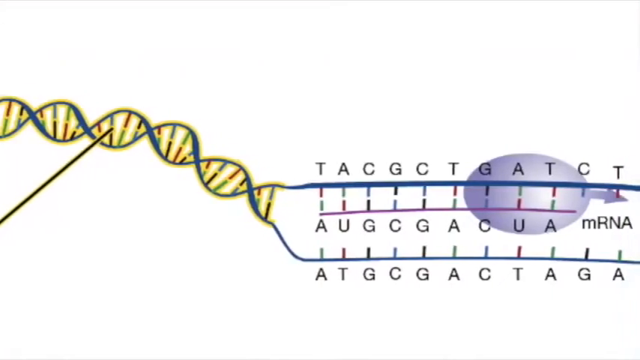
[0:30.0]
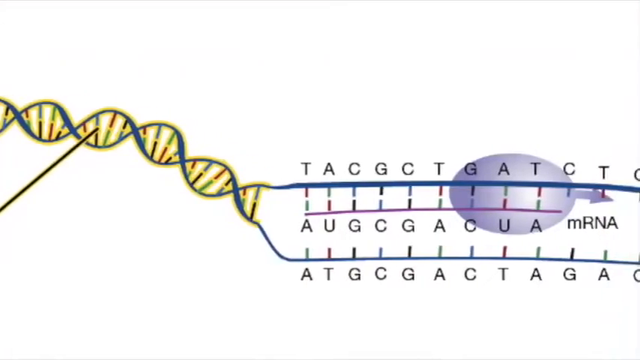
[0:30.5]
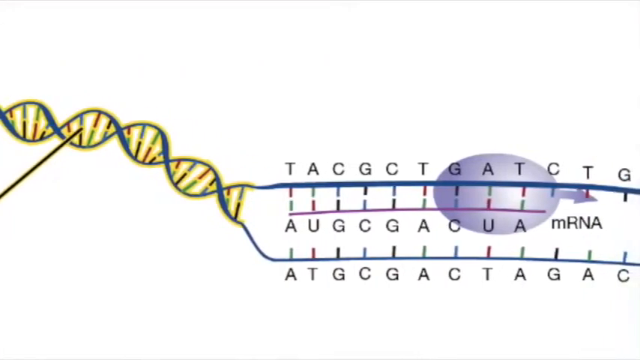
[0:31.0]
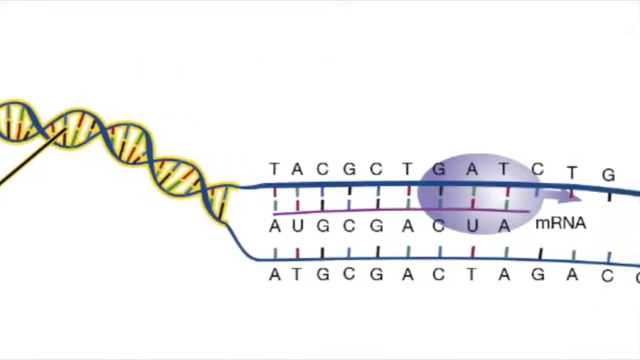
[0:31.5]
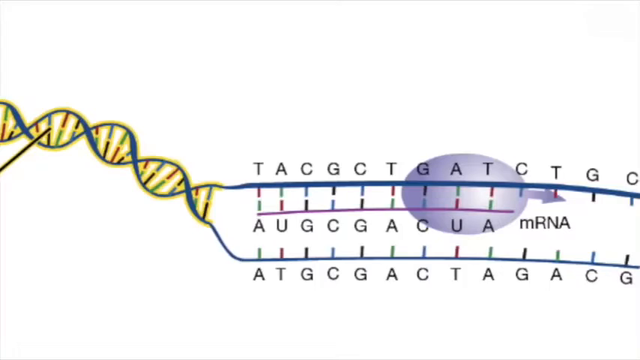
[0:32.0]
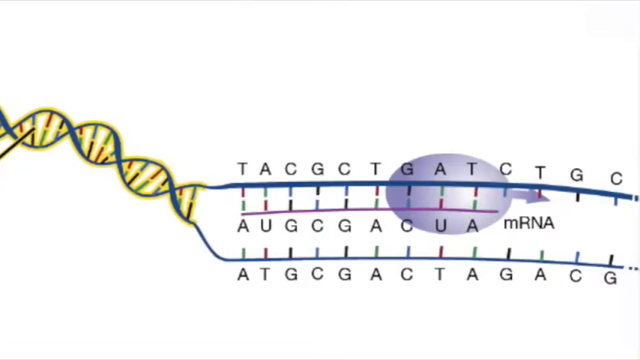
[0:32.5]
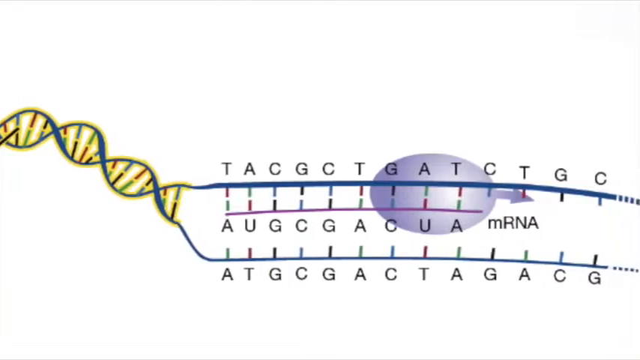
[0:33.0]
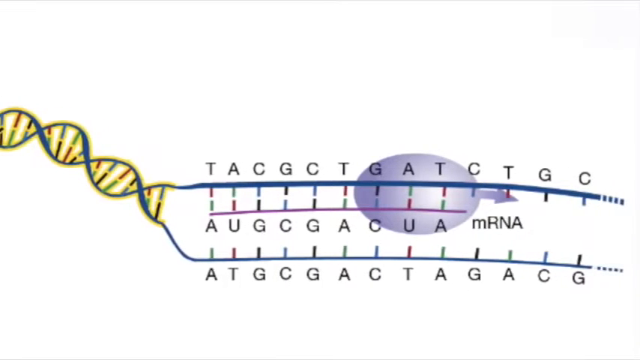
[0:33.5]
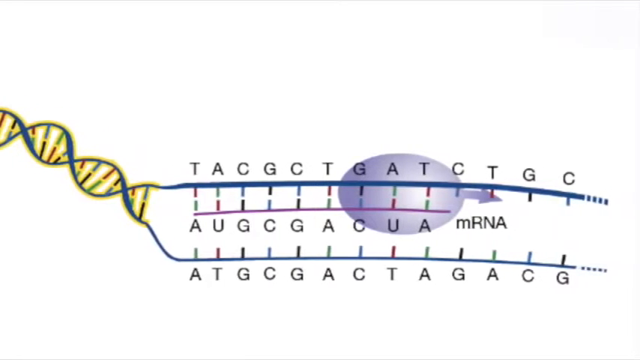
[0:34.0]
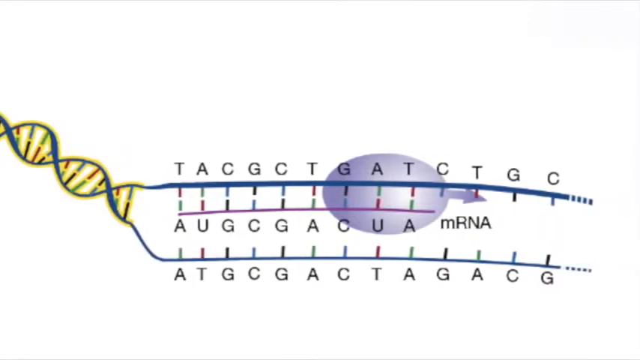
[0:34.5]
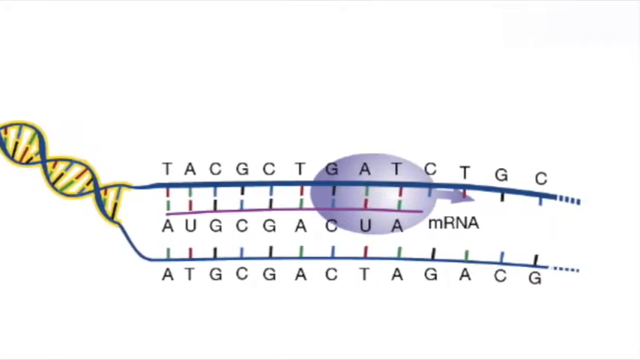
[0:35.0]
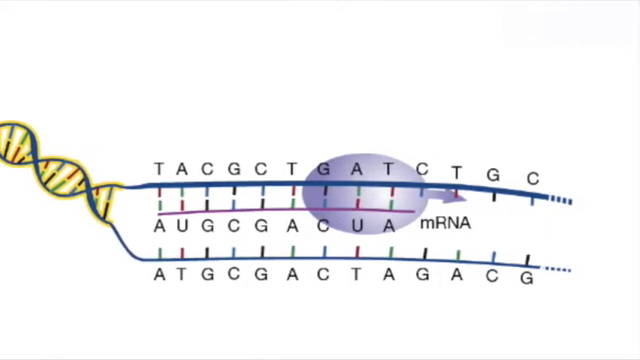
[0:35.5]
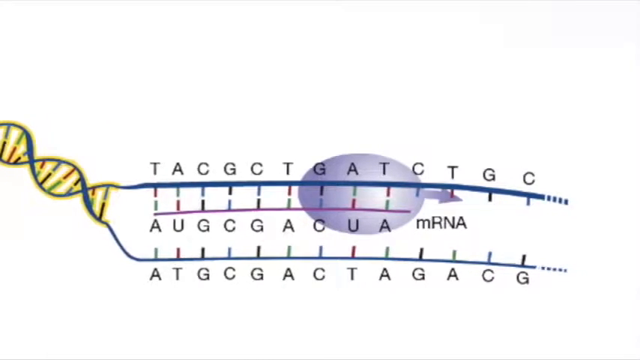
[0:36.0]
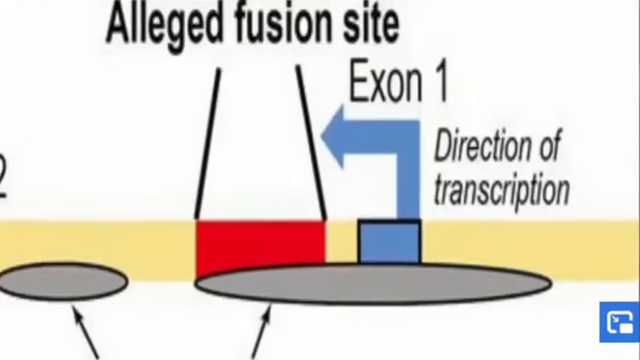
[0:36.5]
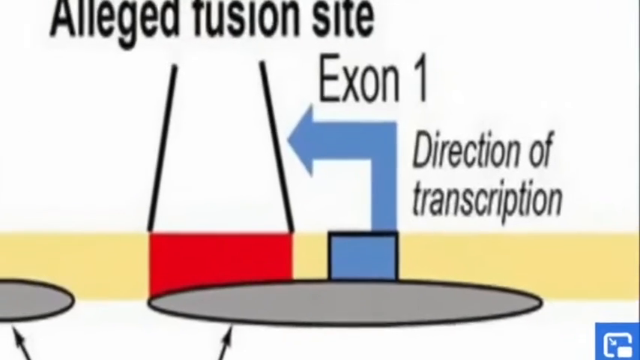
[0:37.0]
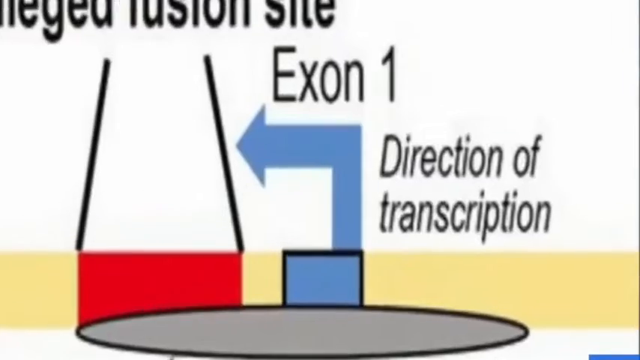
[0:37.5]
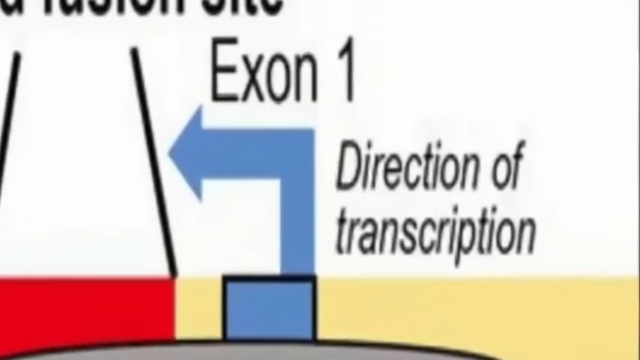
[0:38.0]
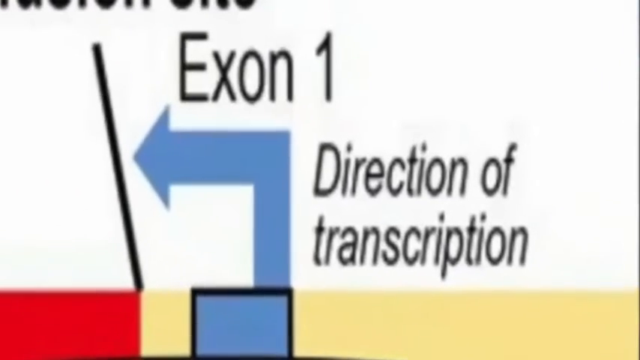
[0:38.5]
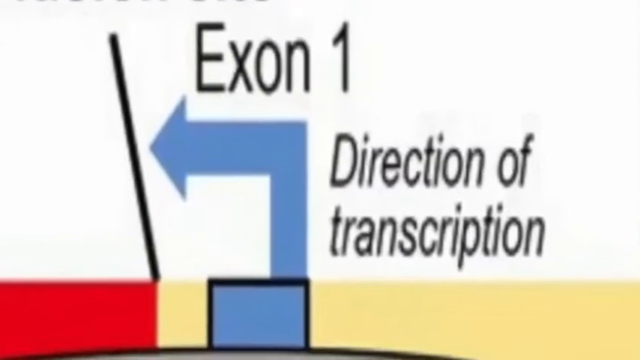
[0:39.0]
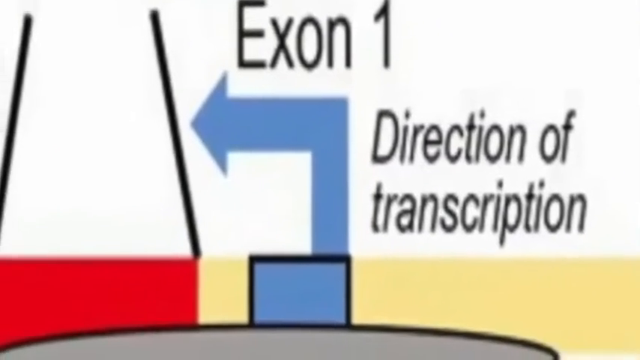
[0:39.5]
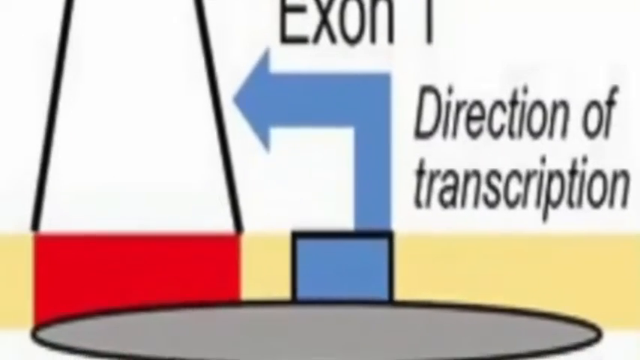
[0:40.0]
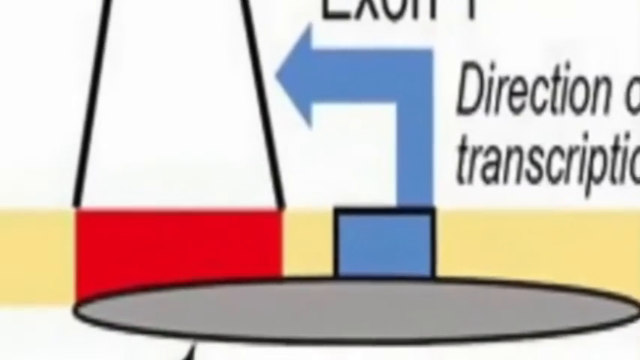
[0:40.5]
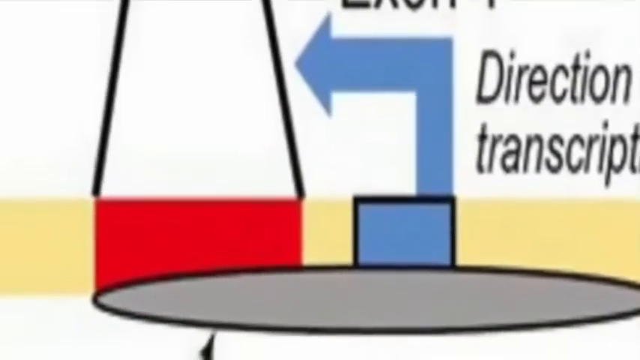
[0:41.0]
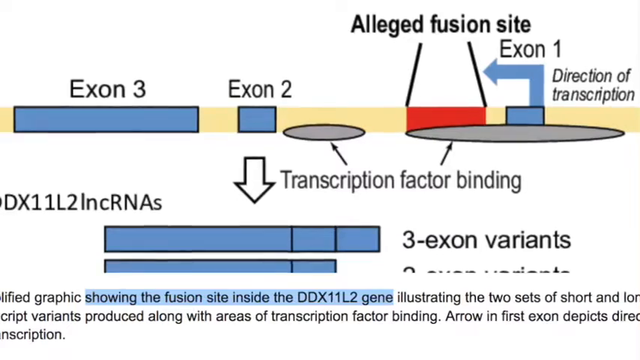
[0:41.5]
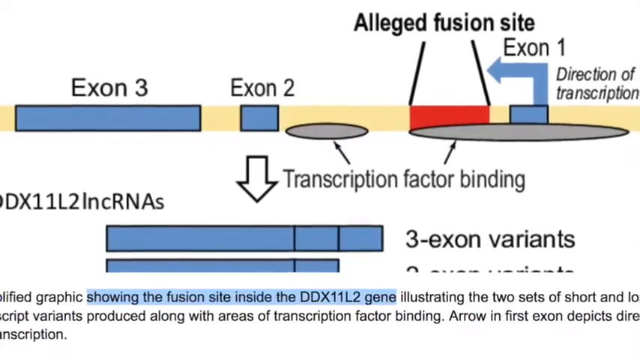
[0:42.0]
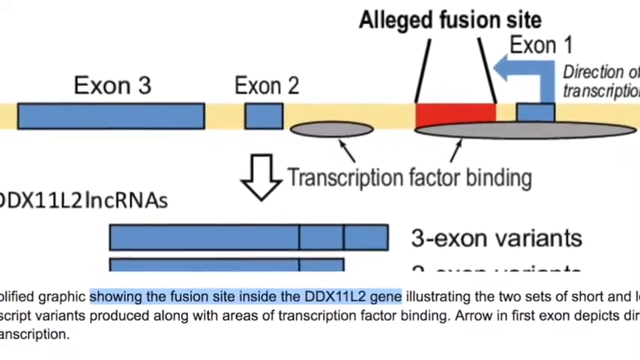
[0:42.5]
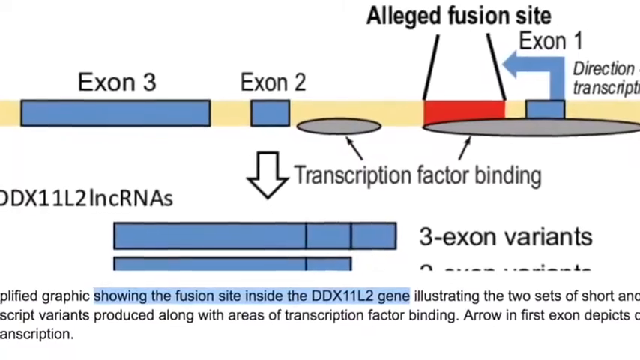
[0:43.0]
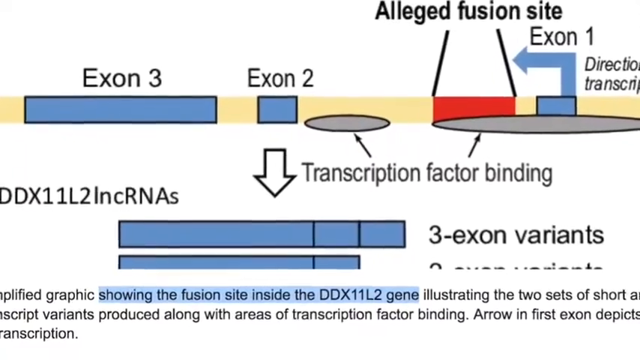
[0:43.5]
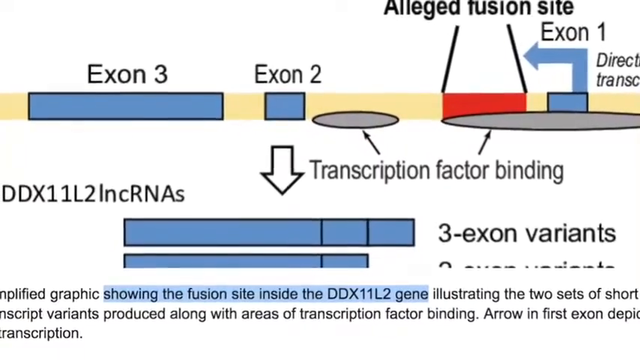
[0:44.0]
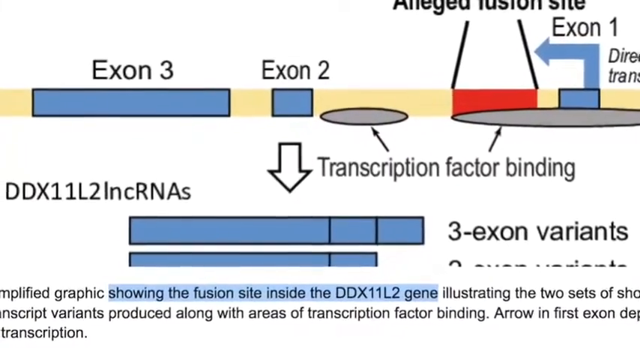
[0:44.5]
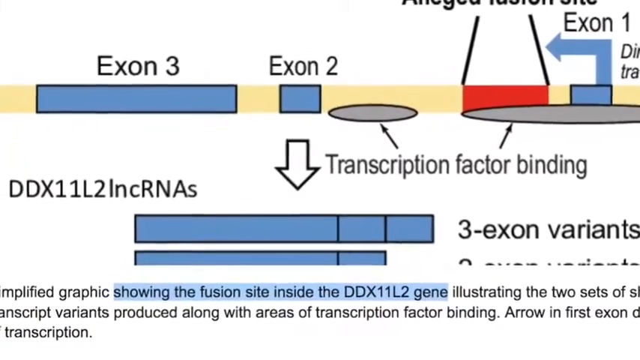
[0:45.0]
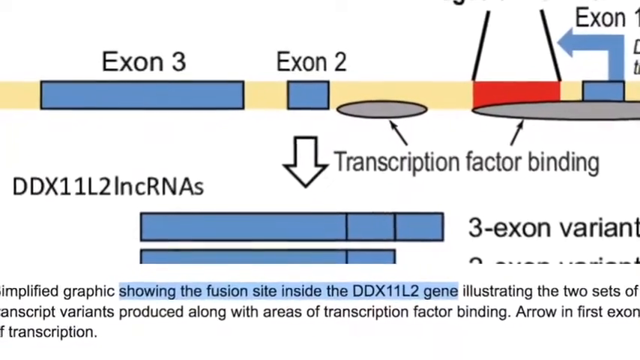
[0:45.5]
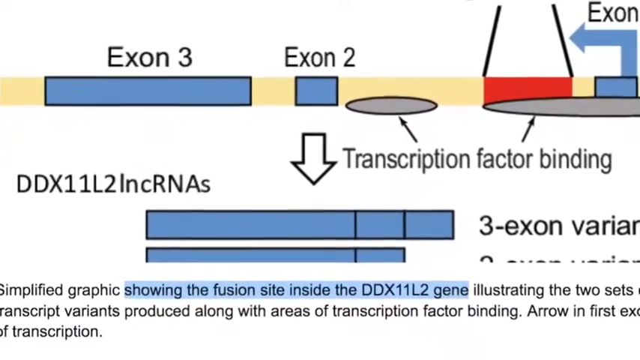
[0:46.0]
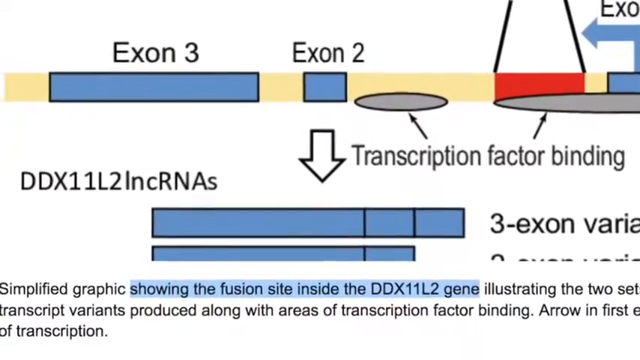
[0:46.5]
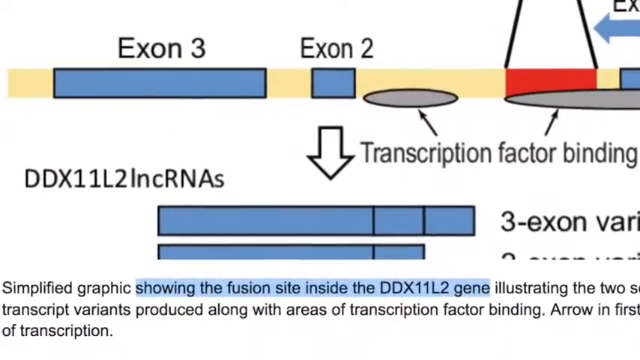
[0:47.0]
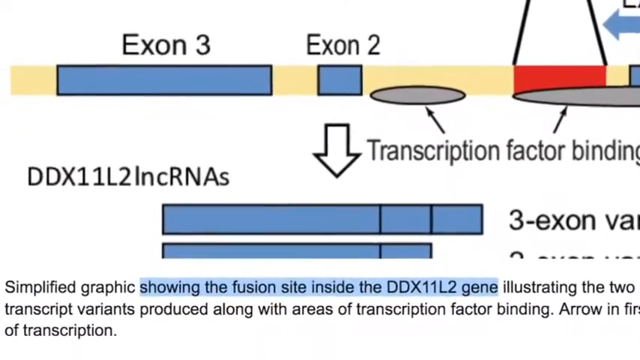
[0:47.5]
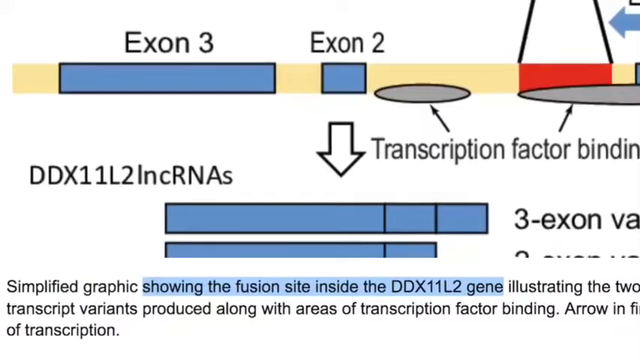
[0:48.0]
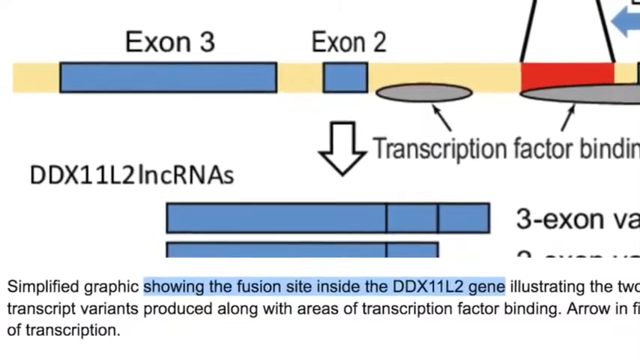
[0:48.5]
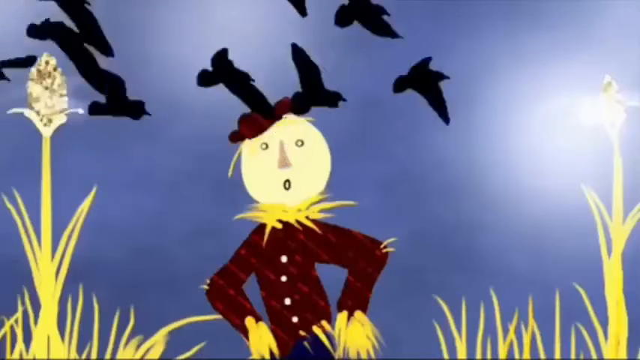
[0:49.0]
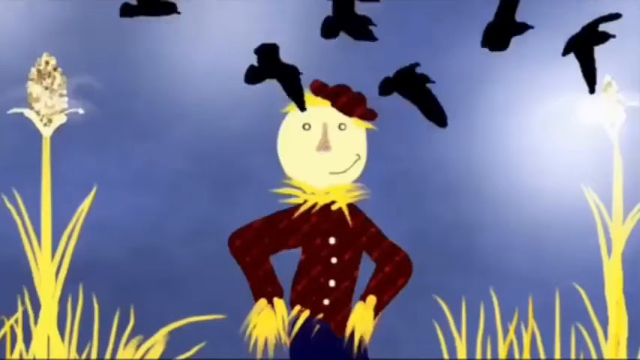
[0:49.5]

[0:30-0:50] The DNA spiral comes from the middle of the left side to just below the middle, with two blue lines coming off each solid line of the spiral and letters on top, in between and below the bottom line. The camera pans to the right to show the rest of the letters. A new screen says "alleged fusion site," "exon one" and "direction of transcription," and very quickly it zooms in on "direction of transcription." To the left of that is a blue arrow that goes up and then to the left. Next is a full page with an image in the right corner. On the left is a blue rectangle with "exon 3" above it, and a smaller blue rectangle says "exon 2." There is a gray oval and then a larger gray oval, labeled "transcription factor binding." Under exon 2 an arrow points down to a bigger rectangle, next to which it says "three exon variants." The bottom of the graph is covered with a page of text, whose highlighted portion says "showing the fusion site inside the DDX11L2 gene," and the camera pans into the DDX11L2 gene. Then an illustration of a scarecrow appears in the center of the screen, with black birds flying from the upper left corner to over the scarecrow. Corn grows to the left and right. The scarecrow wears a red shirt with white buttons, has hay around its neck, an off-white head and a red hat. The birds fly from the left to the right of the screen, and the scarecrow smiles.